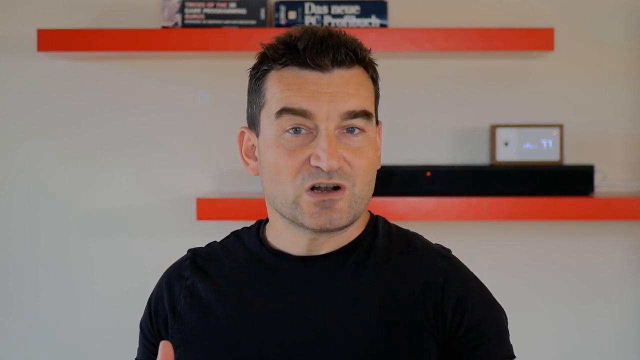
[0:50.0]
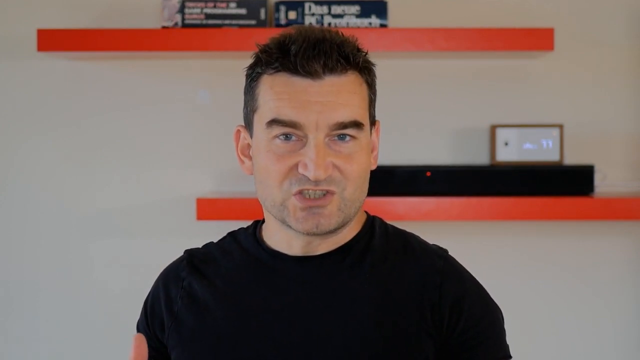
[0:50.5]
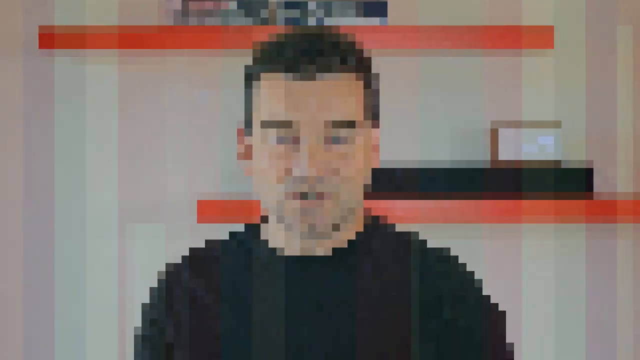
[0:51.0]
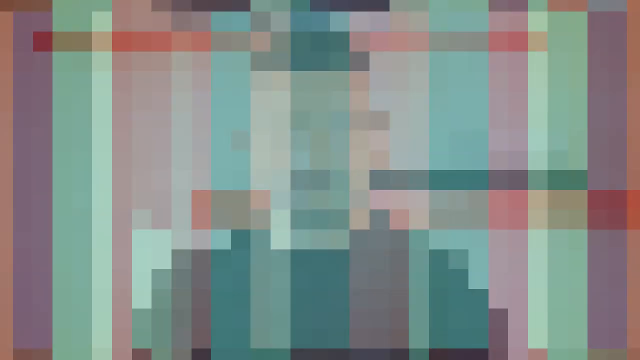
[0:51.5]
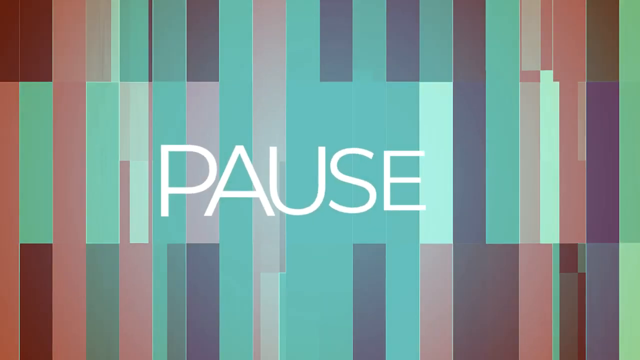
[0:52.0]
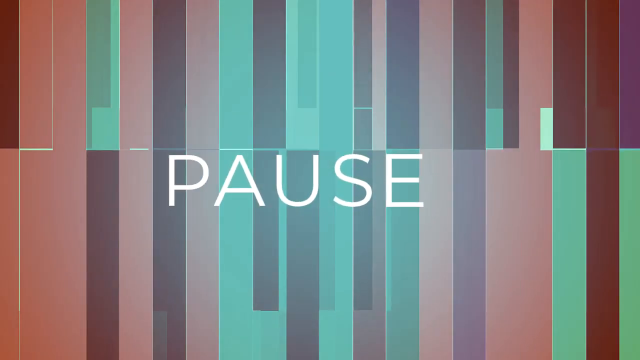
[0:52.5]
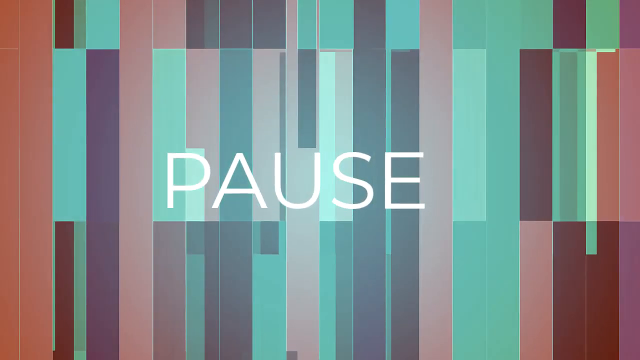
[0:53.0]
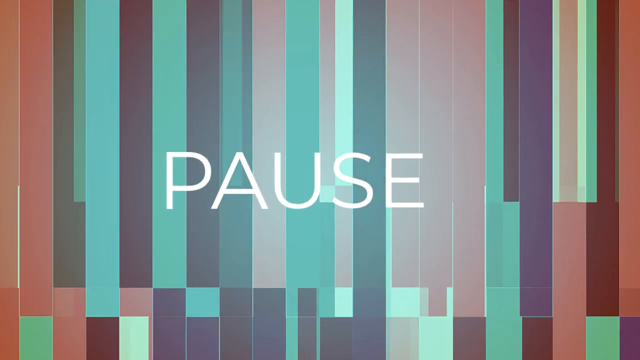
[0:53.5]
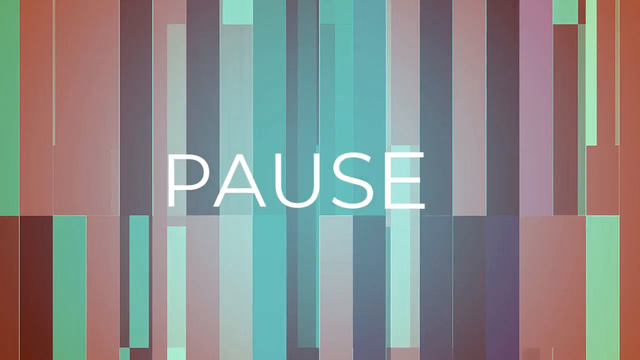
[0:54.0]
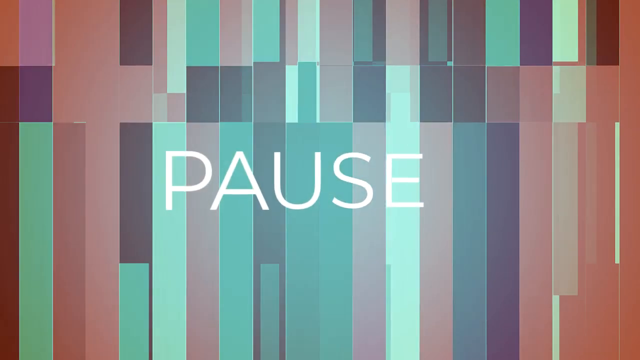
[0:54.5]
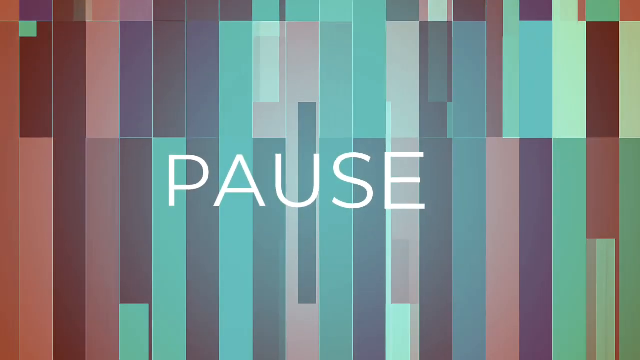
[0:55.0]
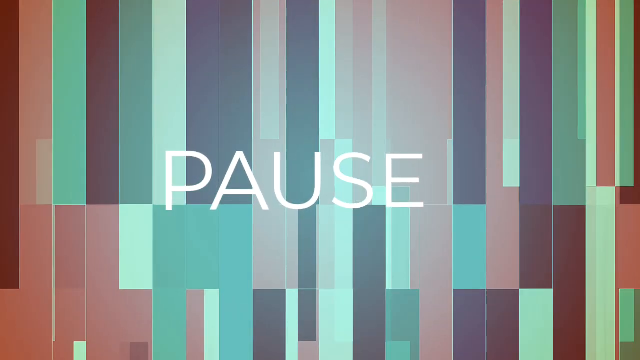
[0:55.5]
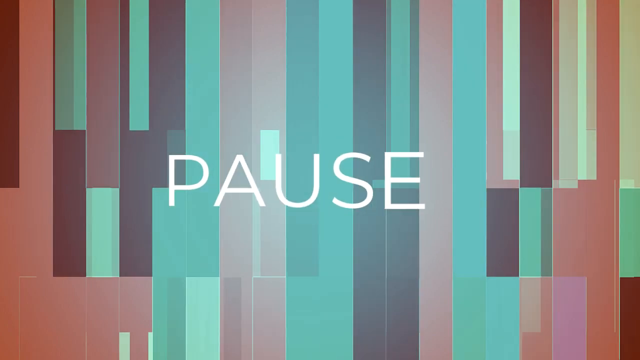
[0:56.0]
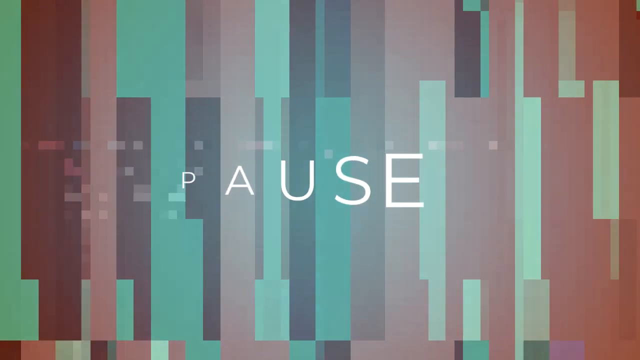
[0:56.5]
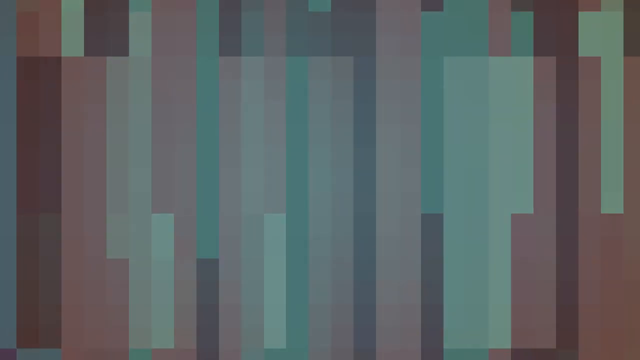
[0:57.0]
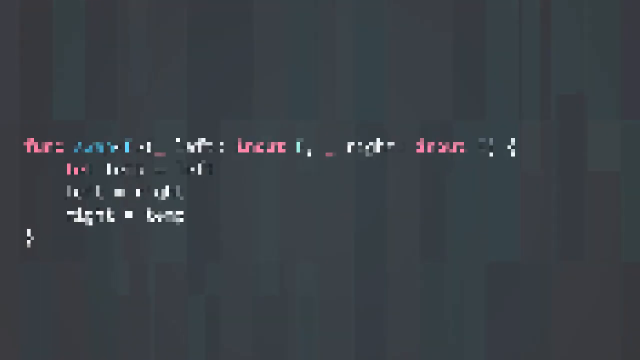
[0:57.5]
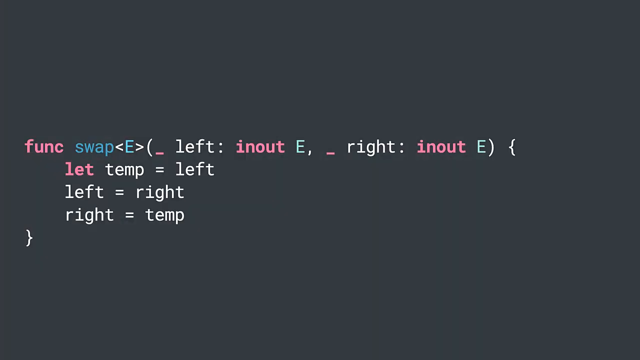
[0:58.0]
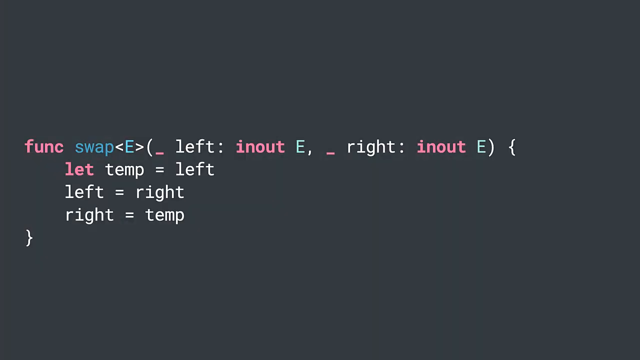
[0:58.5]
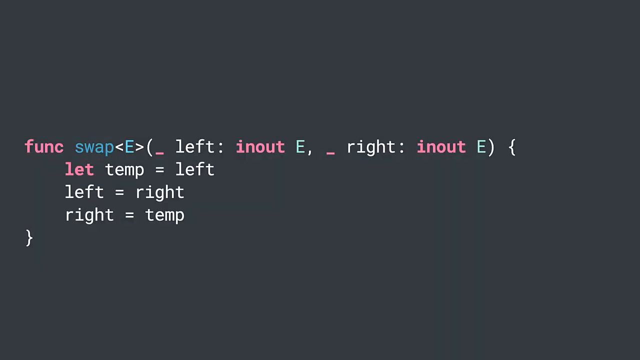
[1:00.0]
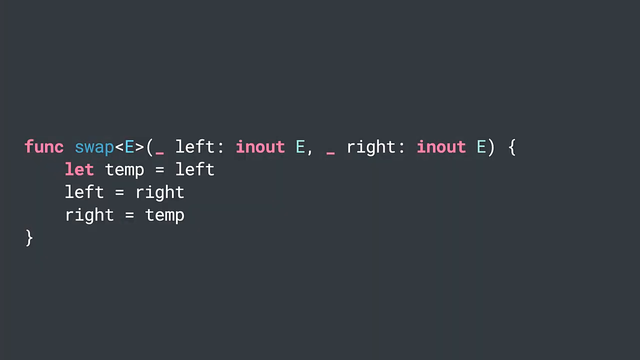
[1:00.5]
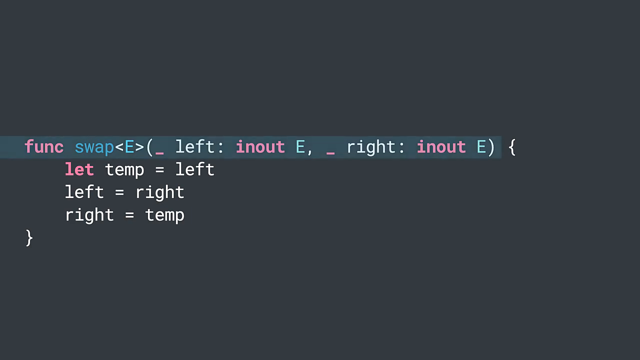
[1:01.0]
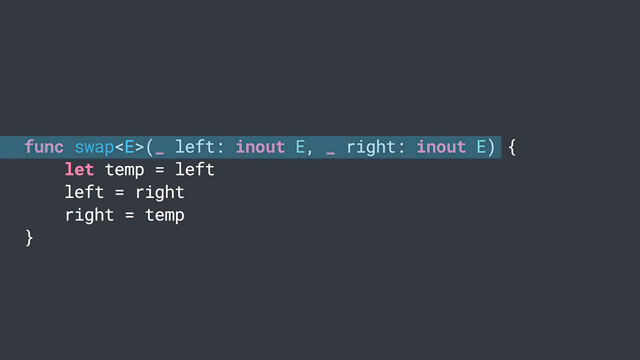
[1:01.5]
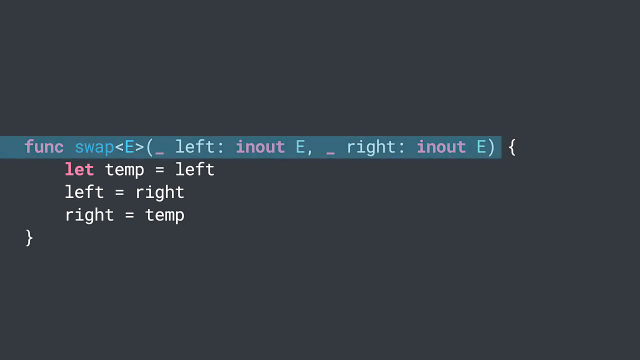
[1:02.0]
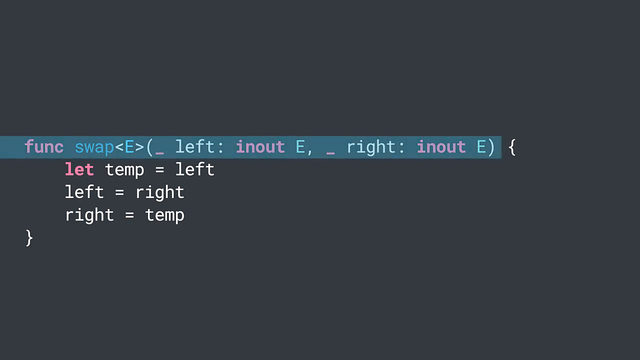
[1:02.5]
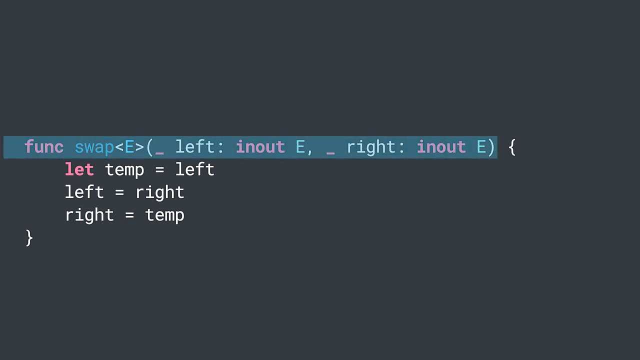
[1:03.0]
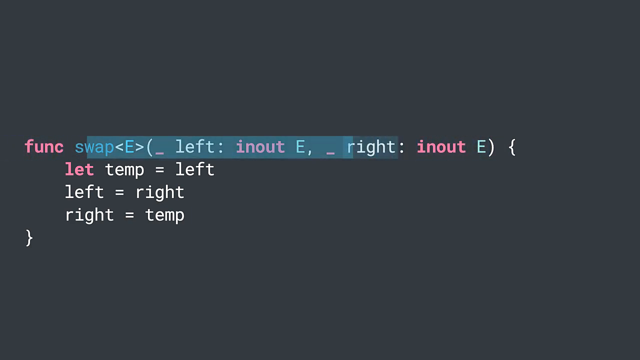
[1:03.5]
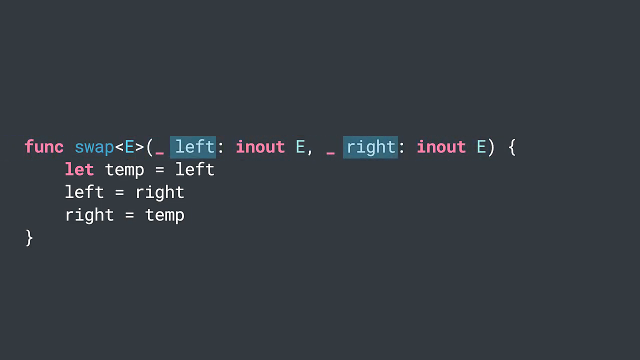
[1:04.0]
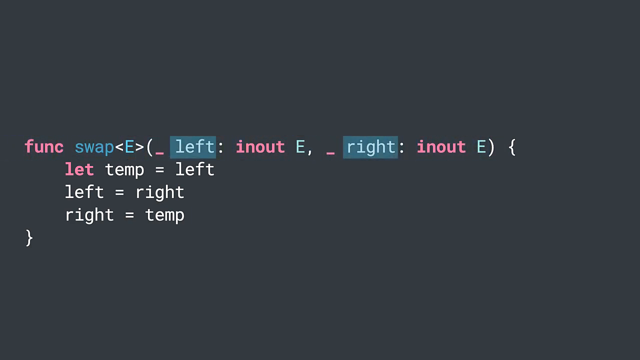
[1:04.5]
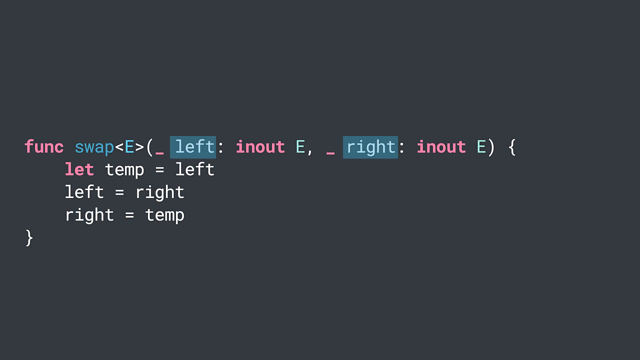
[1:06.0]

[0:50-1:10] A man talks directly to the camera. Suddenly a pause button appears in the middle of the screen, and long, narrow multicolored blocks appear and move up and down. Then an error page appears that says "function swap" and shows different inputs and outputs; it looks very computerized, with messages probably about what just happened on the screen. The man comes back and continues to talk, and then it happens again: the pause button appears, the multicolored blocks move up and down, and the error page appears. Its colors are pink, blue, green and white. The colors seem to move across the screen and highlight other words.